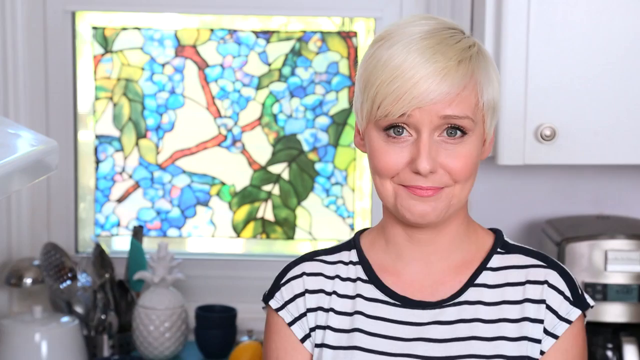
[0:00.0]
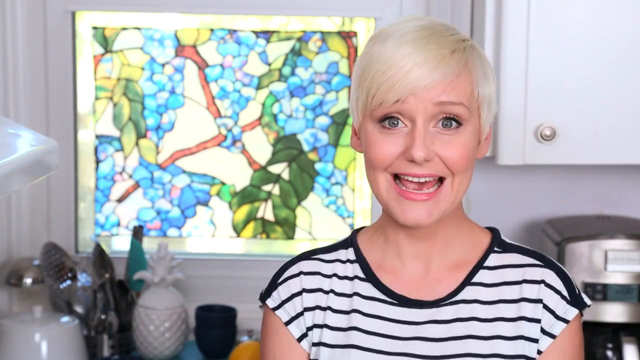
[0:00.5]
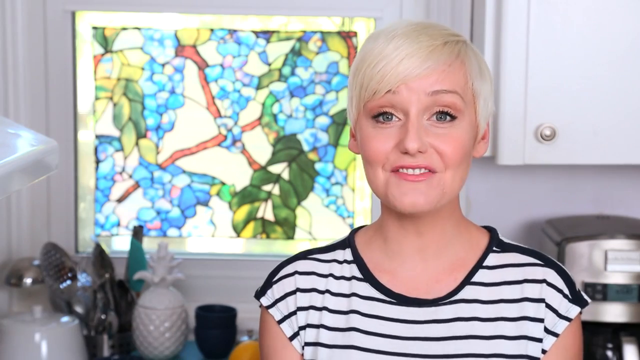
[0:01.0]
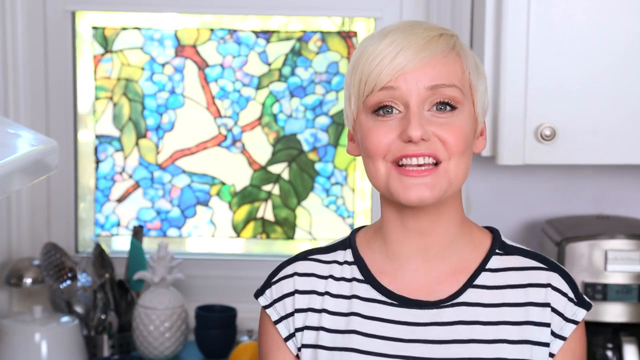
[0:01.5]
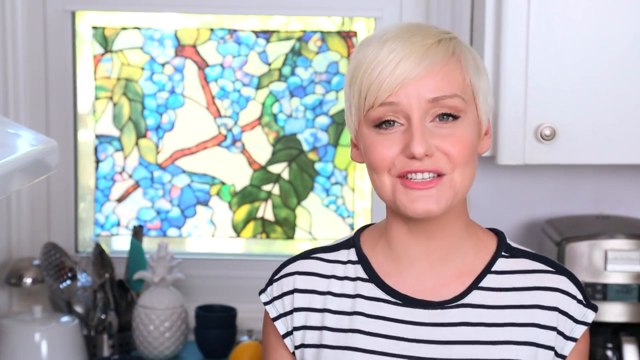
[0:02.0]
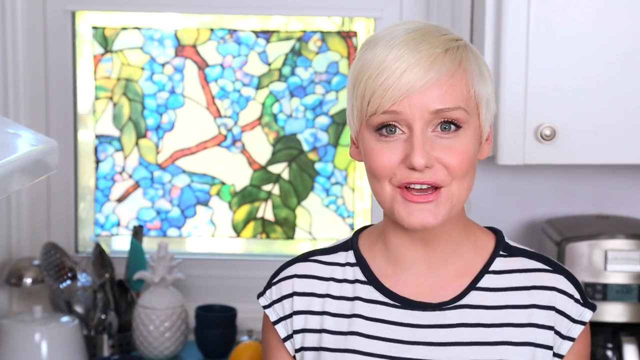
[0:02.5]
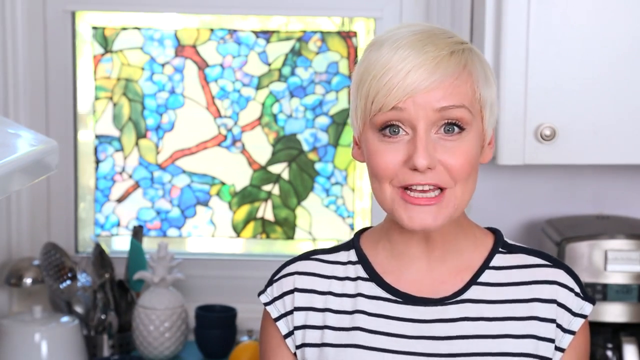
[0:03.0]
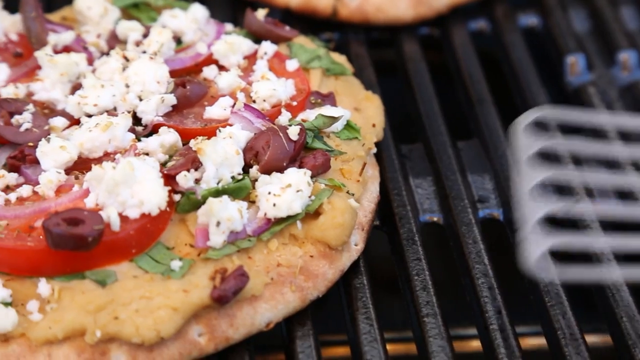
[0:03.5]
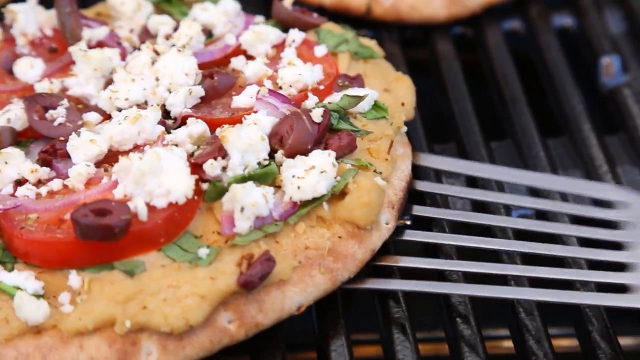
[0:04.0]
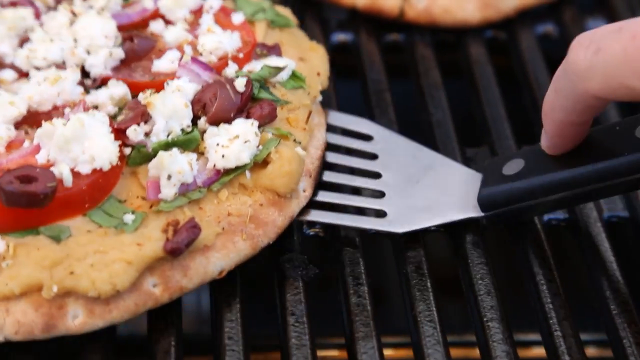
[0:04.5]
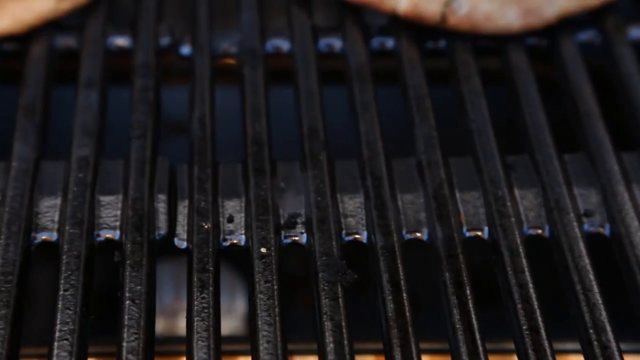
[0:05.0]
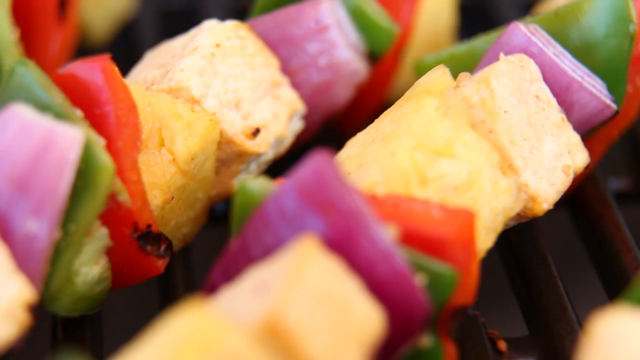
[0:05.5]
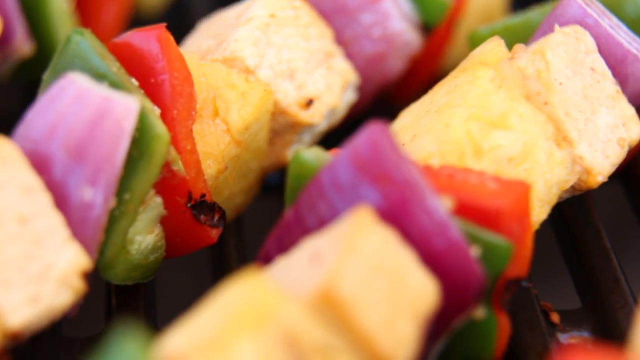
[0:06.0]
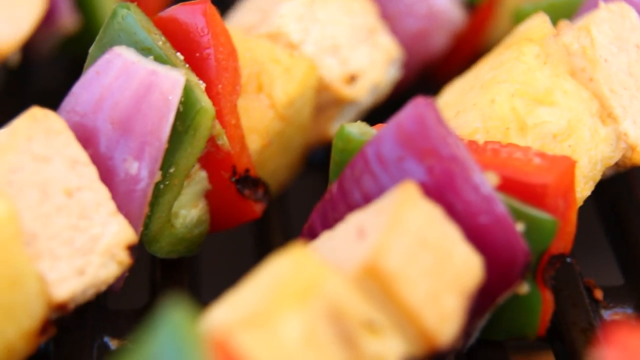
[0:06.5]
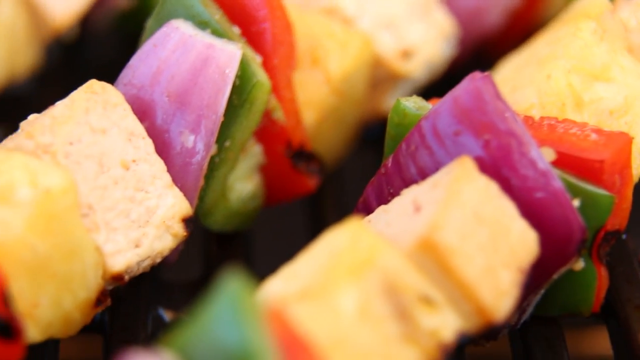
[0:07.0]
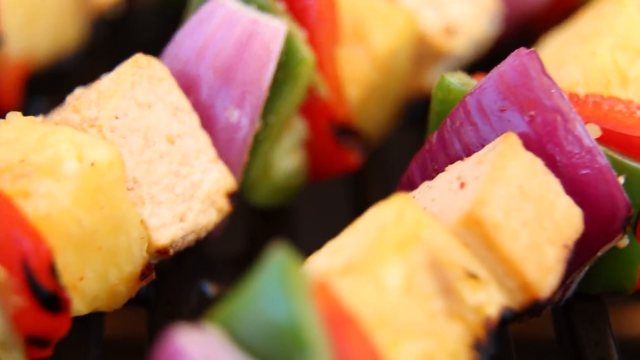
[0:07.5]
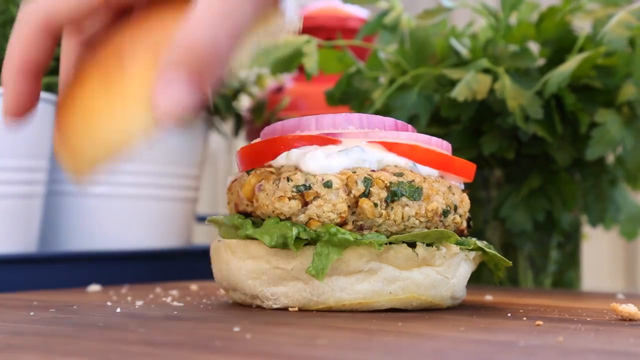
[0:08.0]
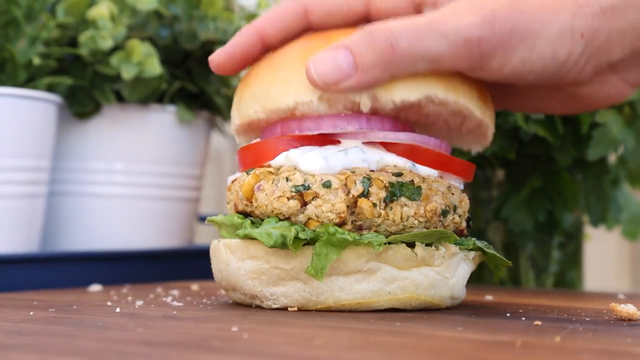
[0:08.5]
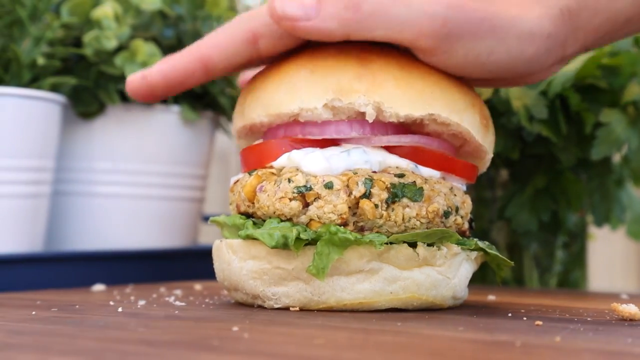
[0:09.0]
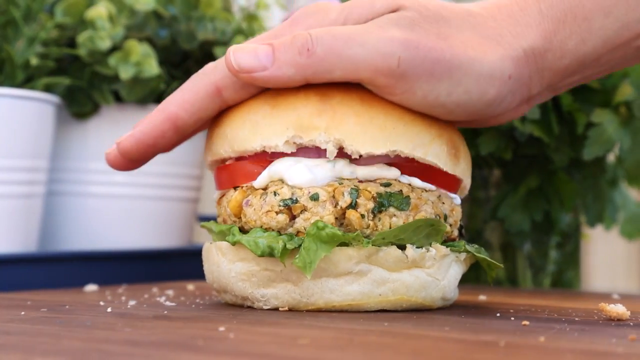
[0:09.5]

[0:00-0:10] The only subject is a single woman; no animals or other people appear. She appears to have short, light blonde hair and green eyes, and from her wrinkles she looks maybe about 30 years old. She wears a black and white striped shirt. She presses down on a burger and appears to be talking. She also gets a spatula and tries to pick up a pizza that is on a grill. There appears to be kebab on the grill itself, with at least two kebabs shown. There appears to be one big pizza and maybe another one that is cut off, and definitely one burger, which looks like maybe a vegetarian chicken burger or something similar. The setting appears to be maybe her kitchen at home.